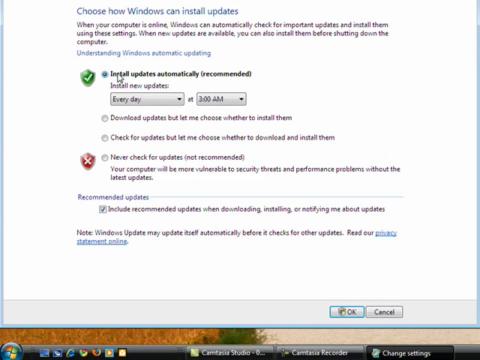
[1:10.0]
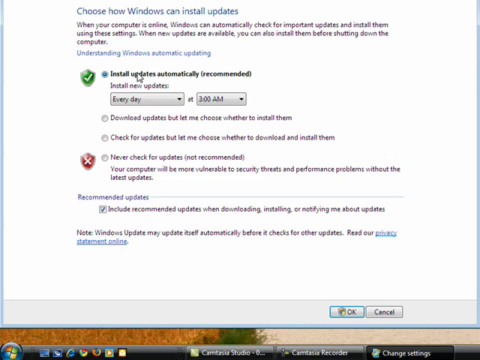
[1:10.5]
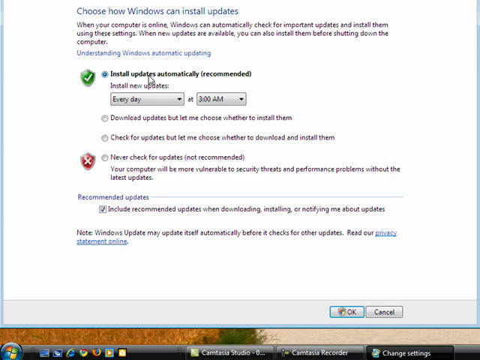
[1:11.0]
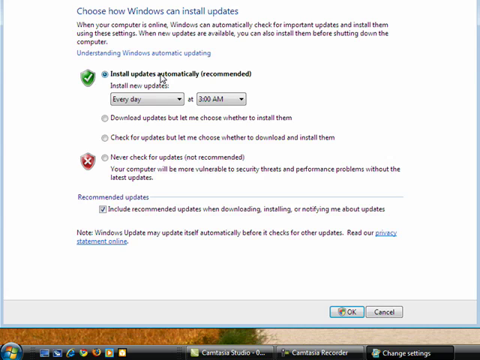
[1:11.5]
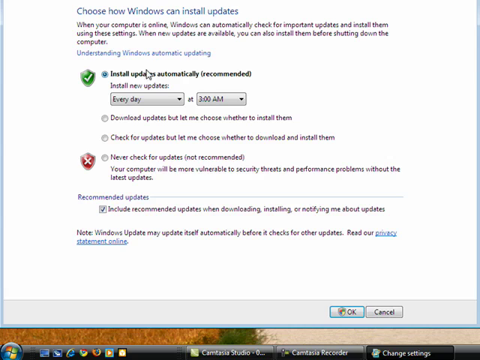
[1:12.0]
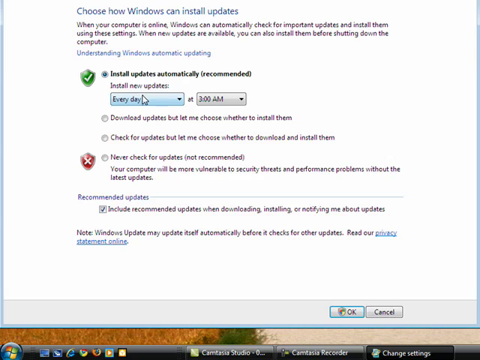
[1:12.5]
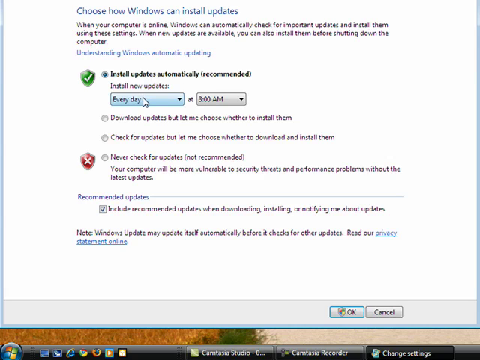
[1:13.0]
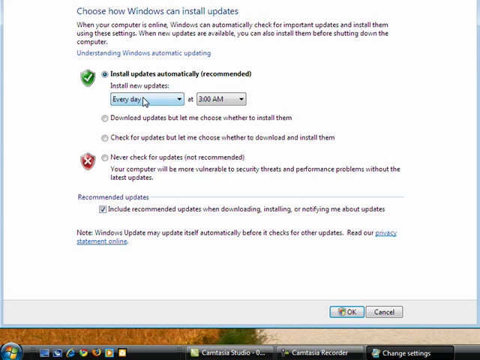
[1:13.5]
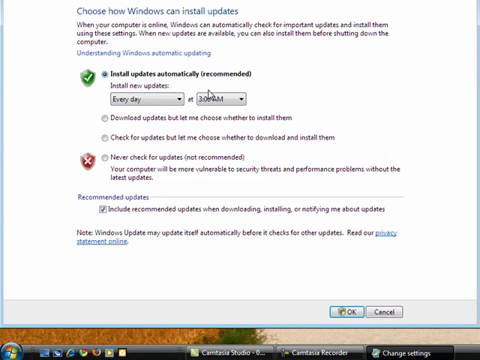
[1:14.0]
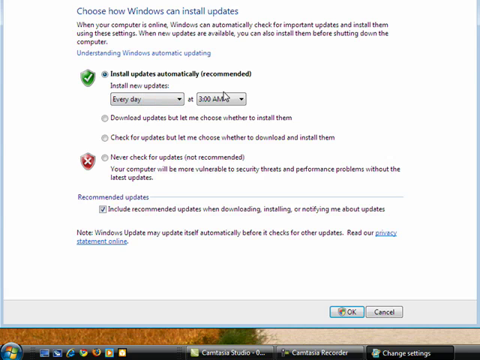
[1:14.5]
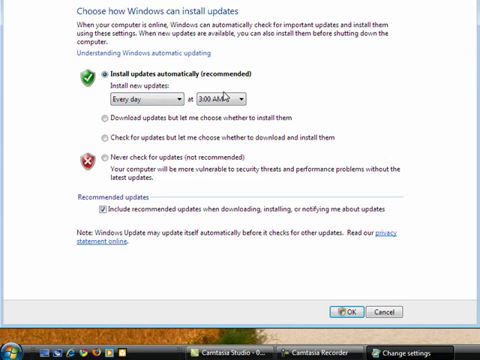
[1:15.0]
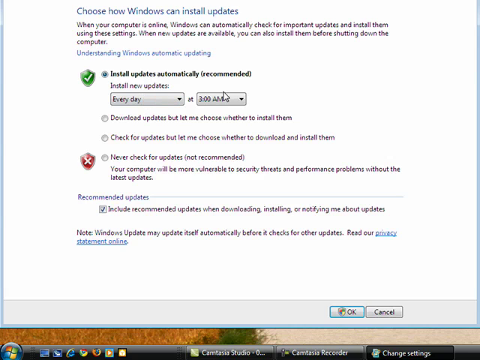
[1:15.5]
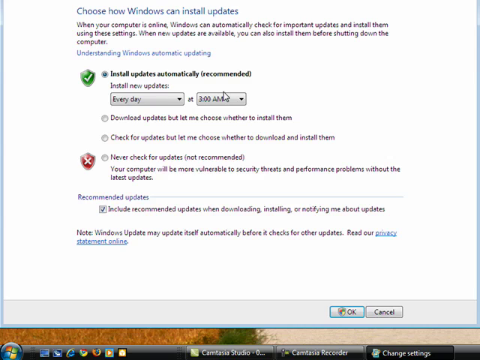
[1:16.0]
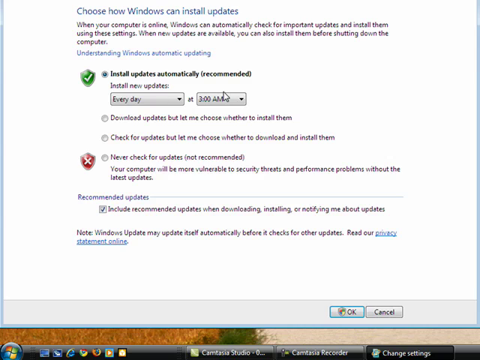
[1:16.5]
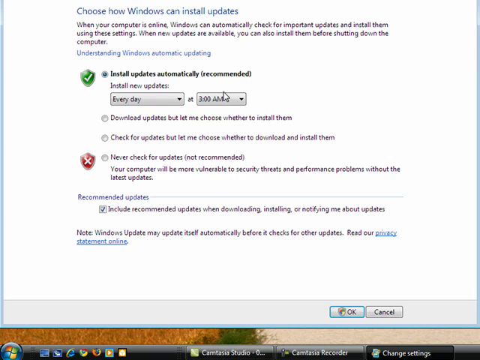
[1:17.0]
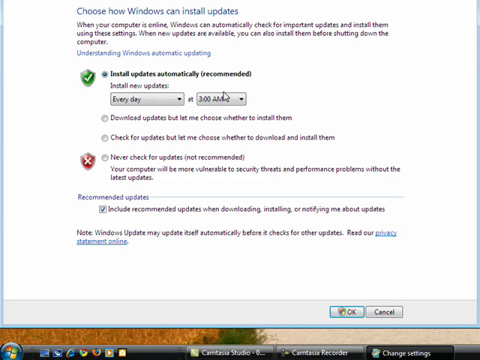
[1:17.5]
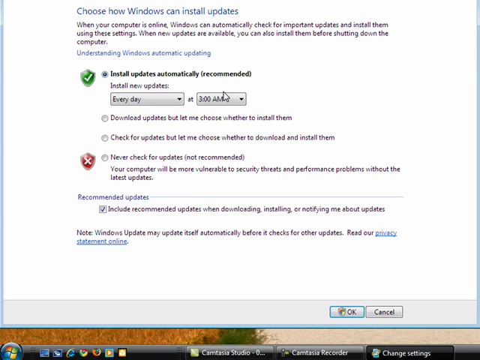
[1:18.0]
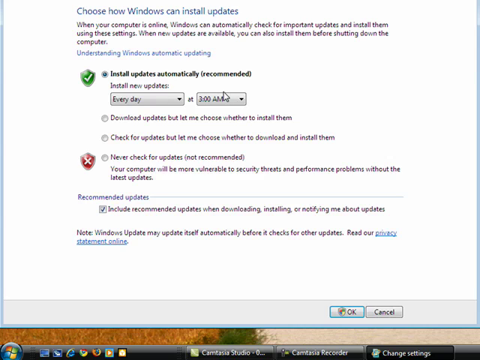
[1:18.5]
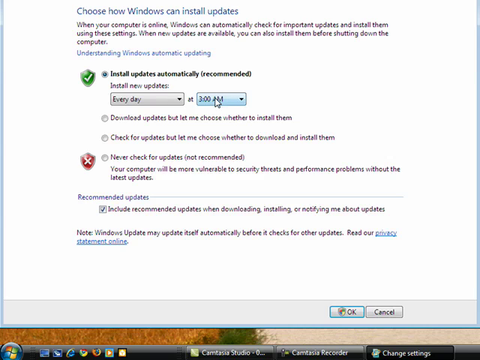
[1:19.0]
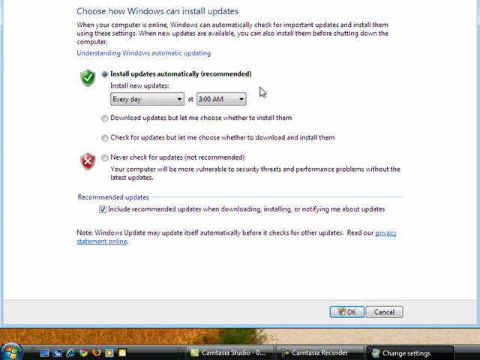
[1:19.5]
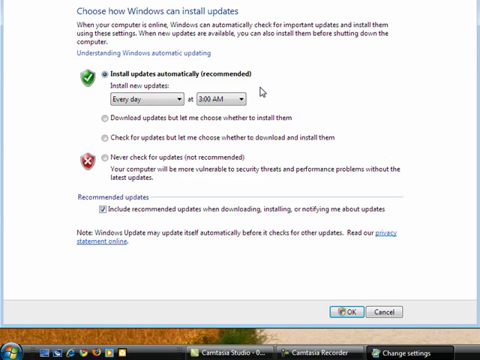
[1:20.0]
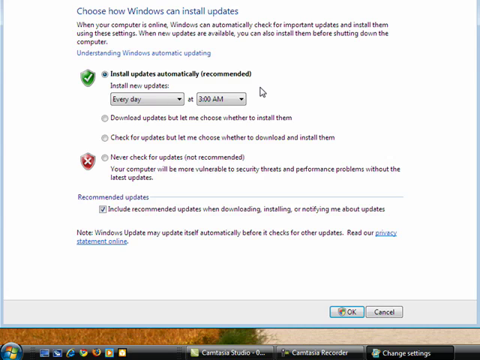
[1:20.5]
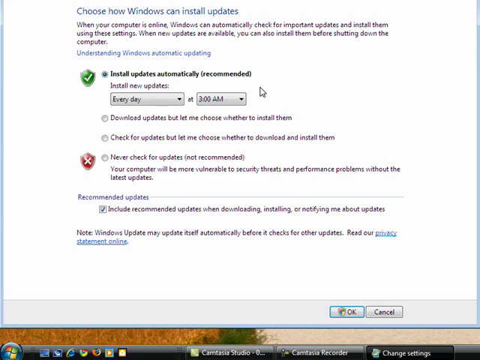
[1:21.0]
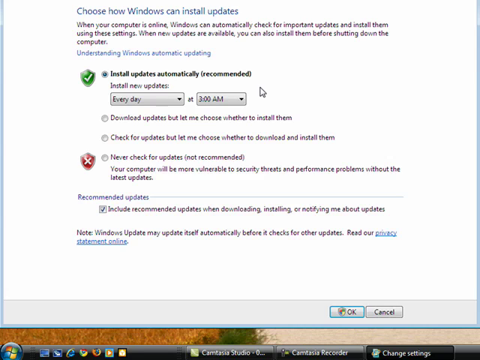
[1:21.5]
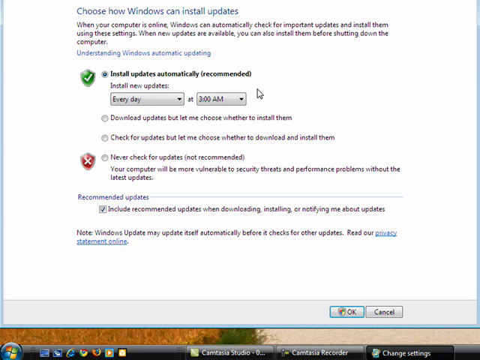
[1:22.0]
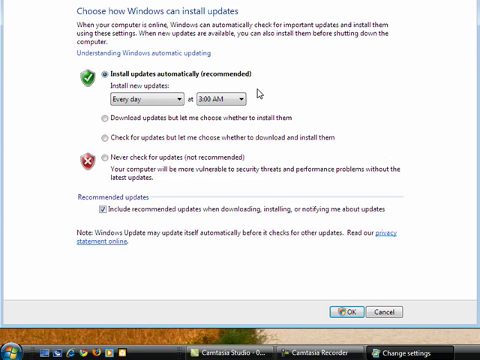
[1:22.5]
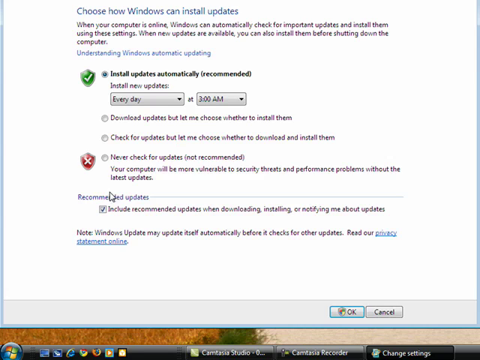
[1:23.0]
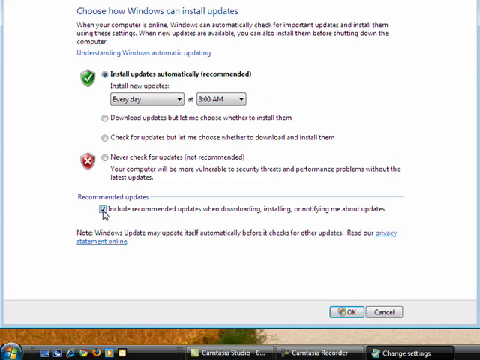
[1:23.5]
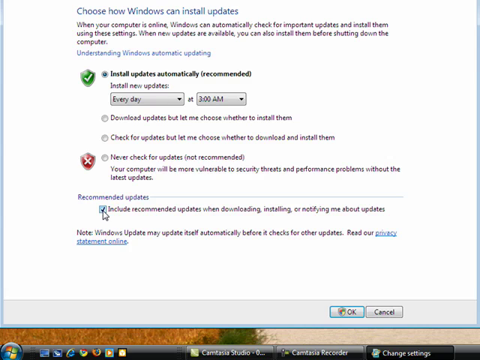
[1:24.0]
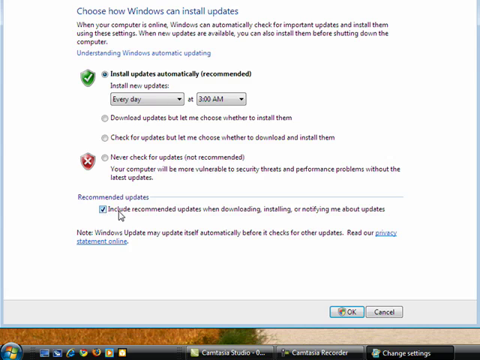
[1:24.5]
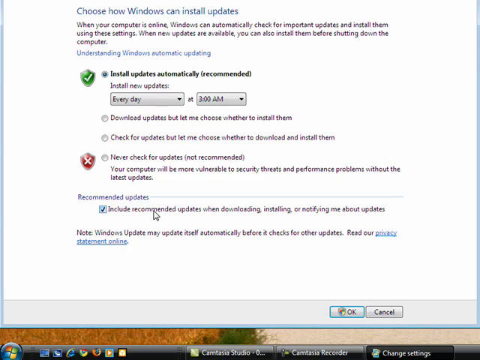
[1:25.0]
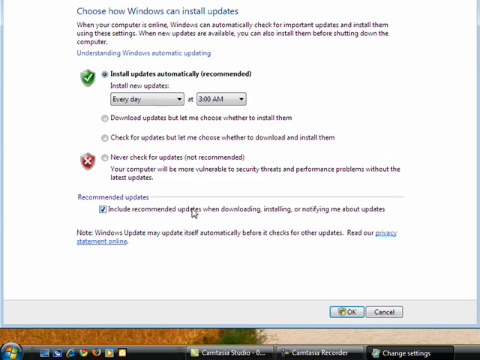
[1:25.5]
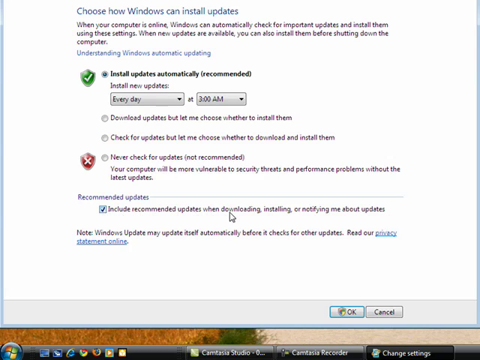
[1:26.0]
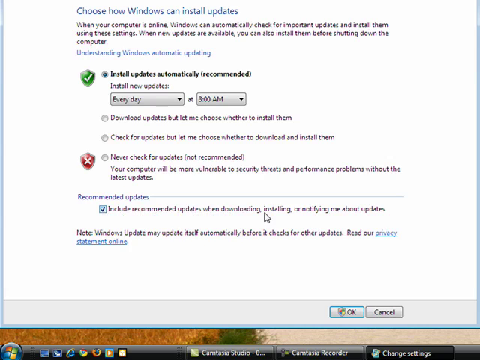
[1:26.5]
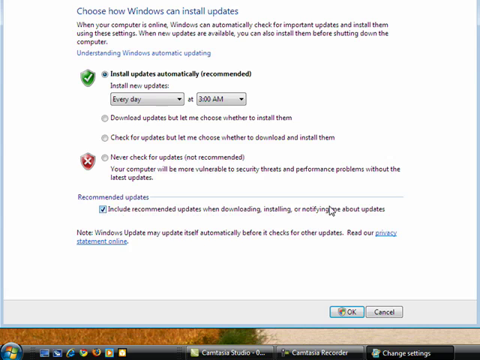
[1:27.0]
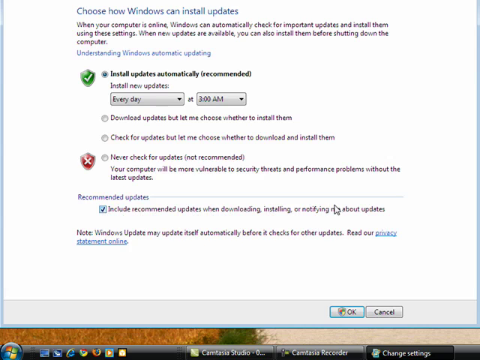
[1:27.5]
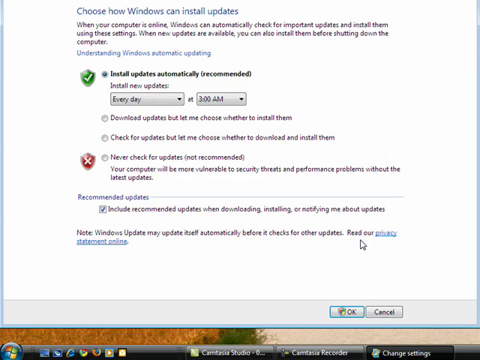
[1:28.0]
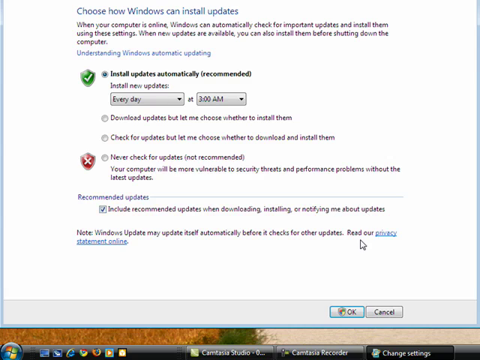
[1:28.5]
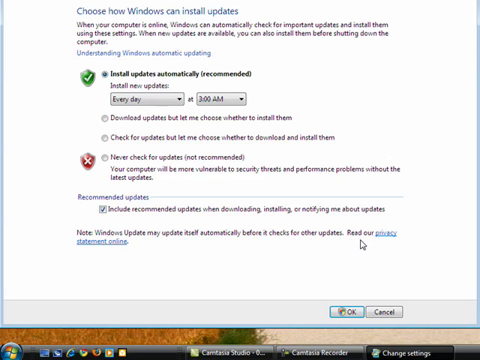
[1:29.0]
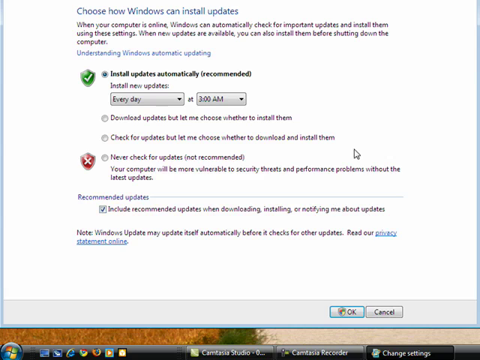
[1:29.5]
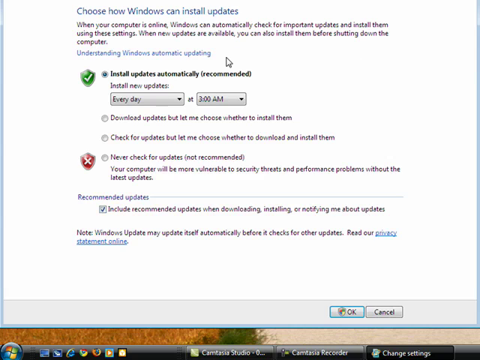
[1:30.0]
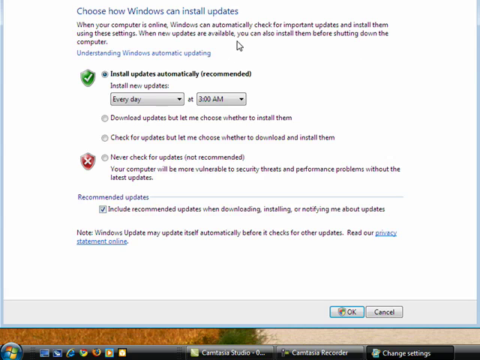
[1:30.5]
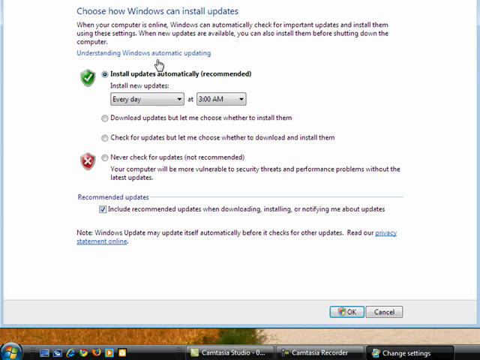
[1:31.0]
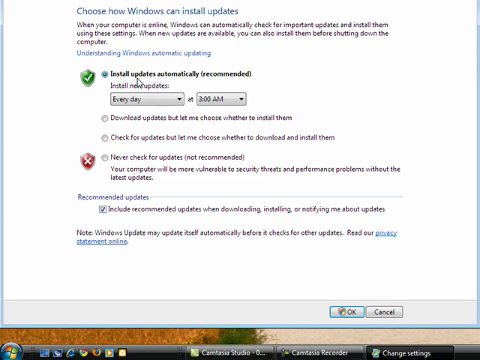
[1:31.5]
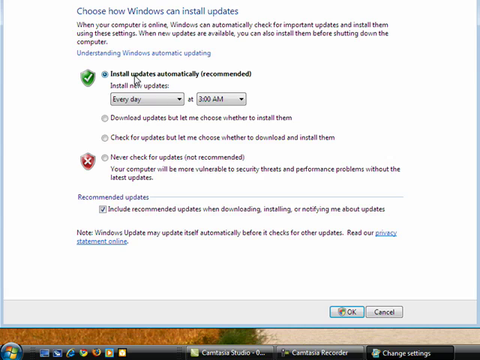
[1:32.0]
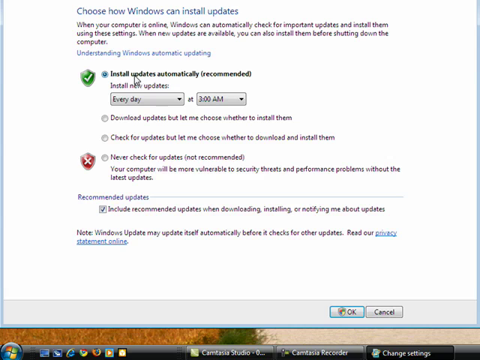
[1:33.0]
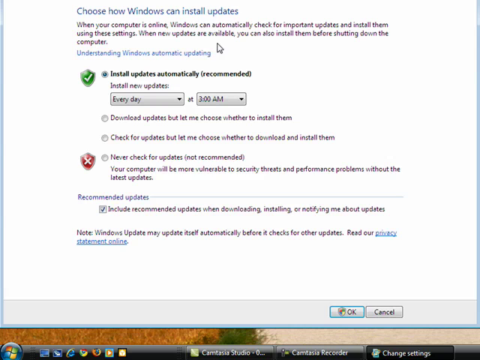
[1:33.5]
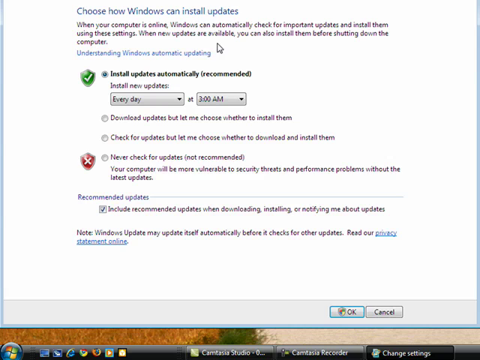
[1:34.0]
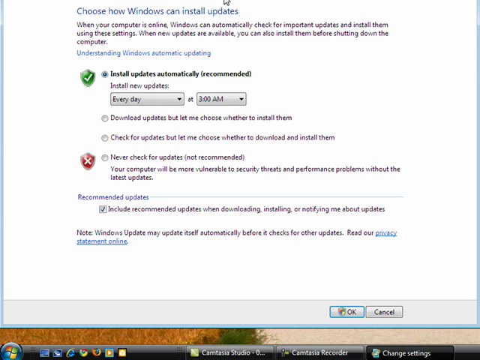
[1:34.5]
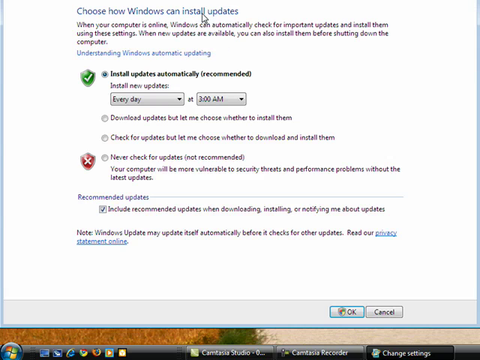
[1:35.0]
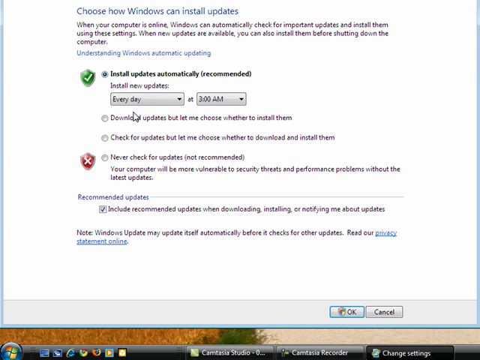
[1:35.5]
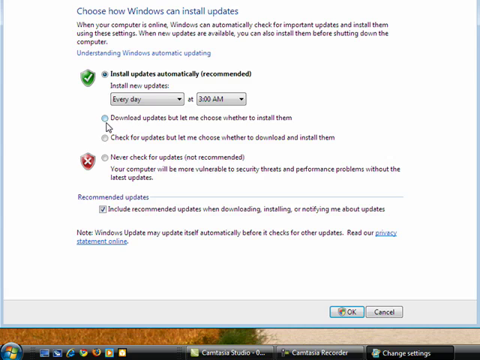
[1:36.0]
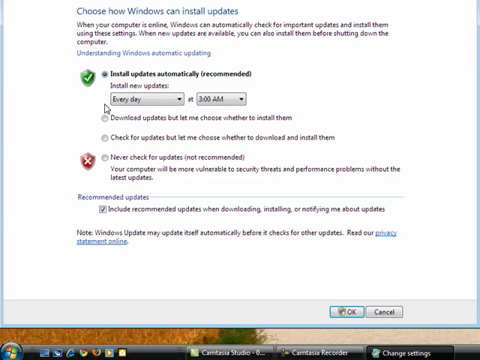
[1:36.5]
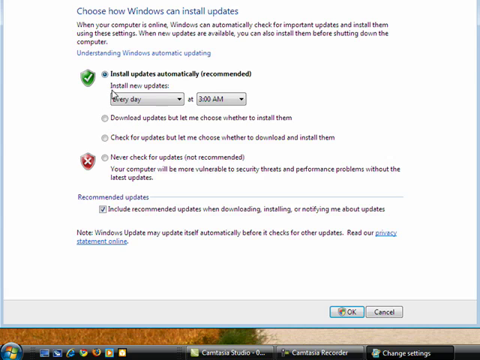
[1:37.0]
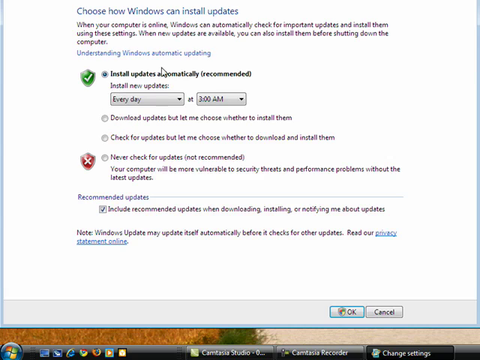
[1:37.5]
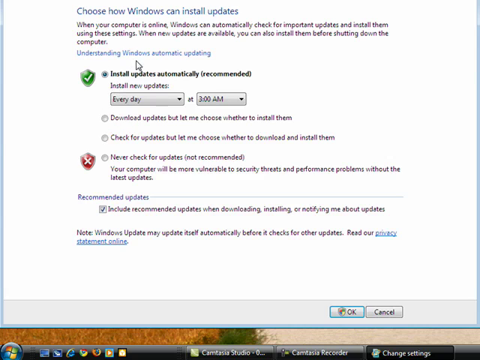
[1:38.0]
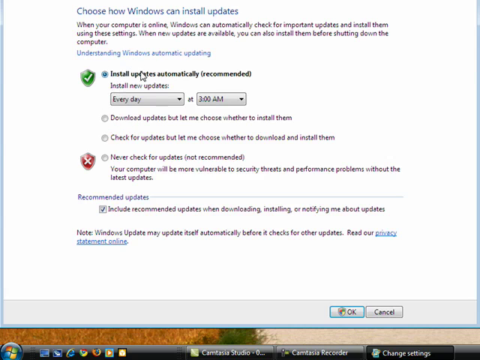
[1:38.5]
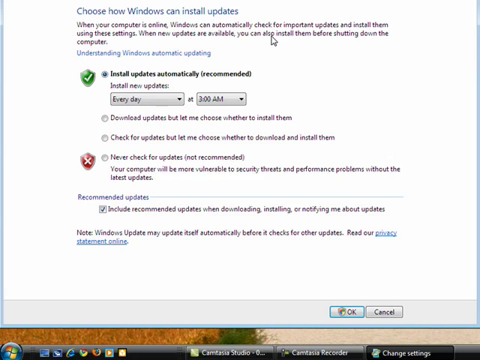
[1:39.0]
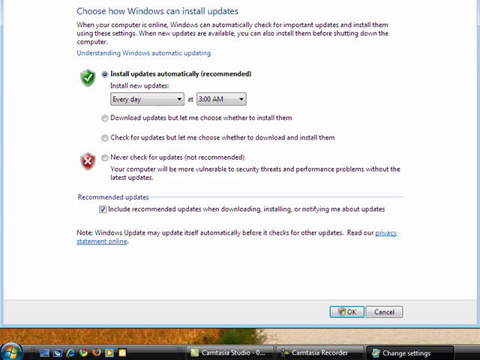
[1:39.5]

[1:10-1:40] The person is still on the "Choose how Windows can install updates" screen. They move the mouse cursor over the selected option that says "install updates automatically," which is recommended by Windows. Then they move the cursor to the bottom of the screen, where it says "include recommended updates when downloading, installing, or notifying me about updates." The person uses the cursor to read through the options without changing any choices or settings on the page. On the screen, an x on a red background is marked beside "never check for updates," and this option says "not recommended."